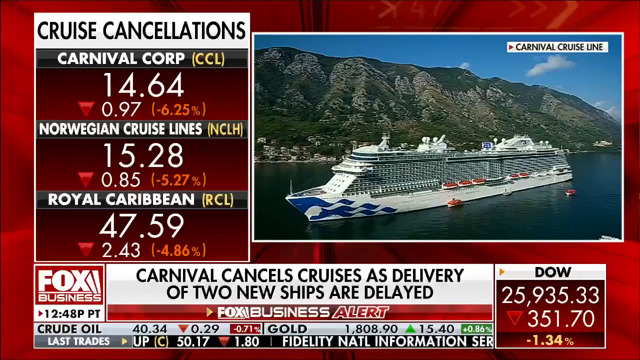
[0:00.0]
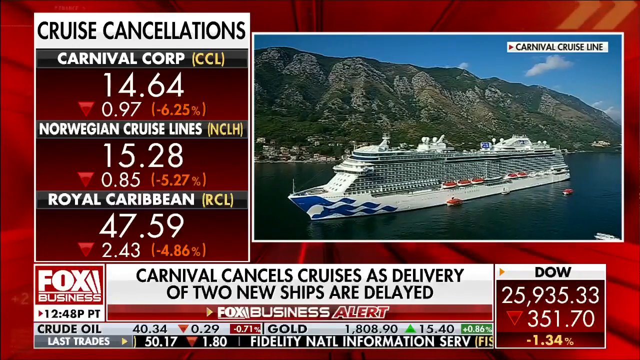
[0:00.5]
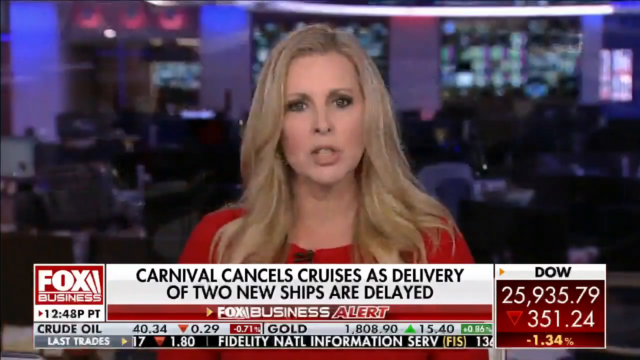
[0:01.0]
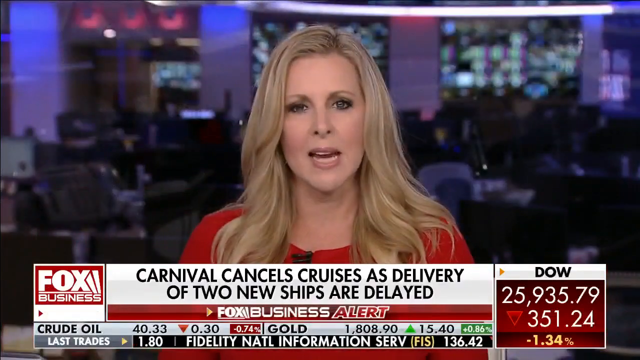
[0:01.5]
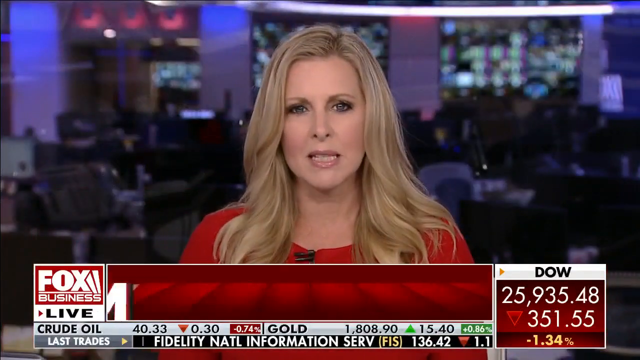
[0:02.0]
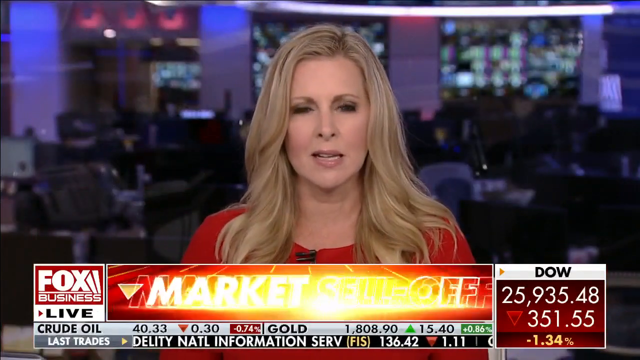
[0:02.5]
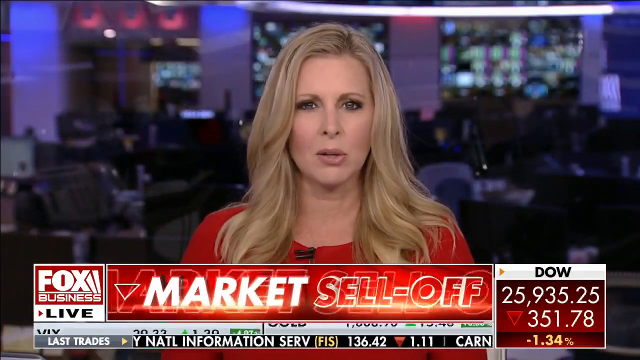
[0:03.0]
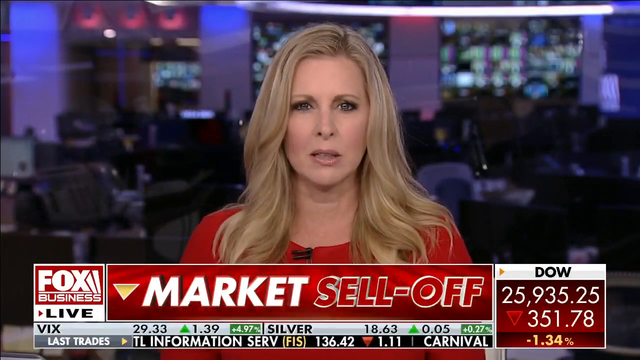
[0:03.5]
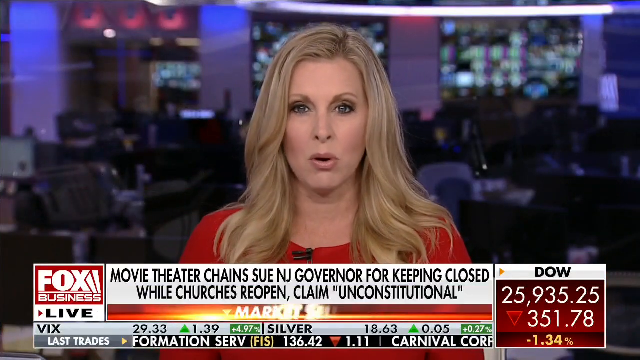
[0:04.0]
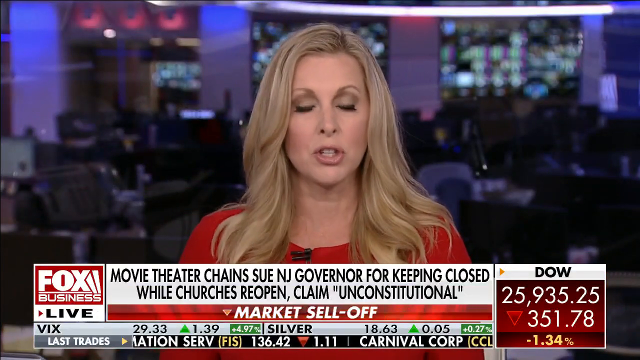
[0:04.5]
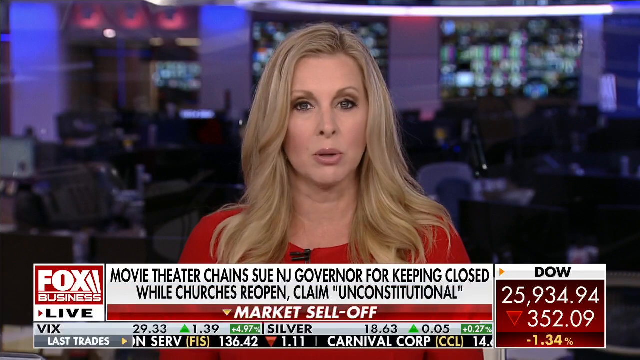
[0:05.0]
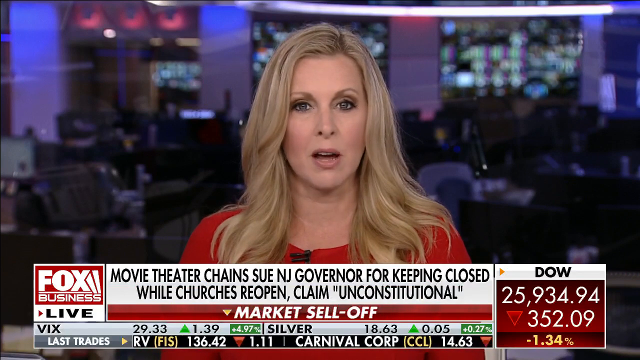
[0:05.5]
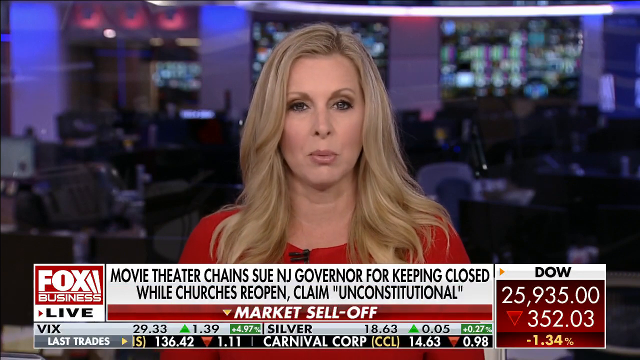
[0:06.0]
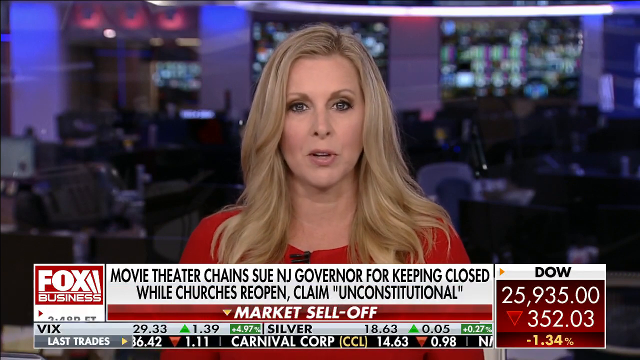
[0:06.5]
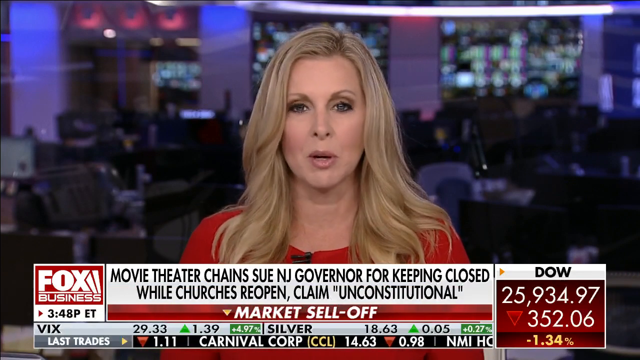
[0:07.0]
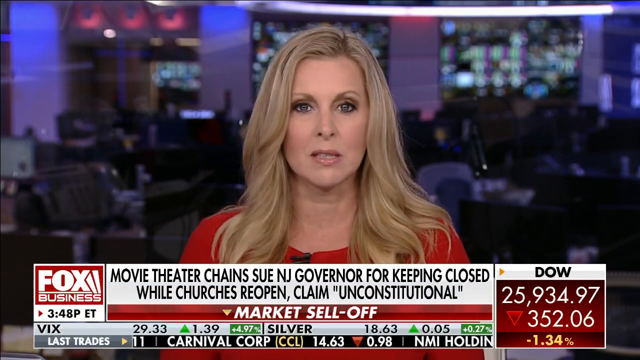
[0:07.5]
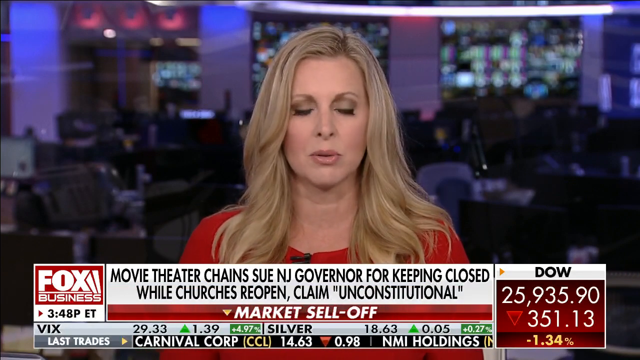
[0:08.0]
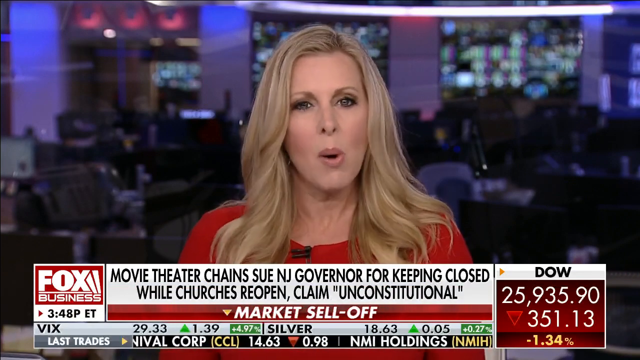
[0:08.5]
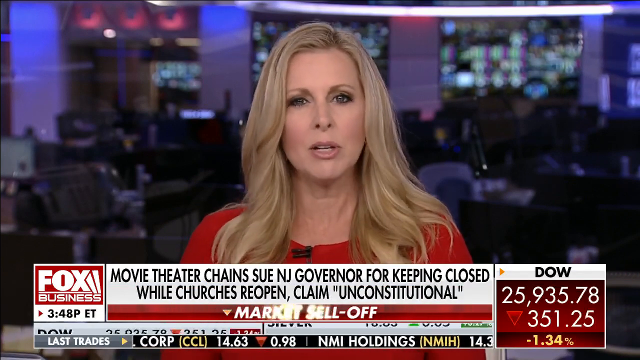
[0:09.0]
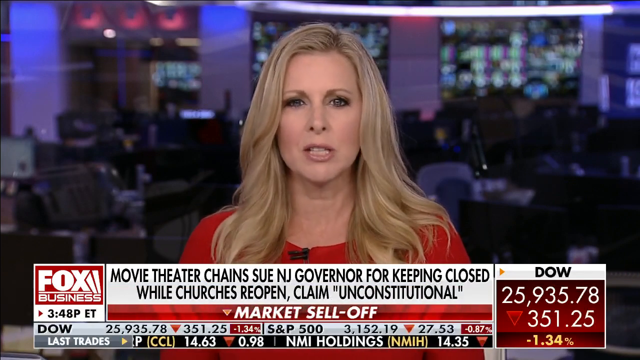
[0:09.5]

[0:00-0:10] The video opens on a news bulletin or news channel with the text "cruise cancellations". Stock figures are listed: Carnival Corp at 14.64, Norwegian cruise lines at 15.26 and Royal Caribbean at 47.59. At the bottom is "Fox Business", with the headline "Carnival cancels cruises as delivery of two new ships are delayed", followed by a picture of the Carnival cruise line. A woman with blonde hair in a red dress then appears, talking. A caption reads "Movie theater chains sue NJ Governor for keeping closed while churches reopen claim unconstitutional".